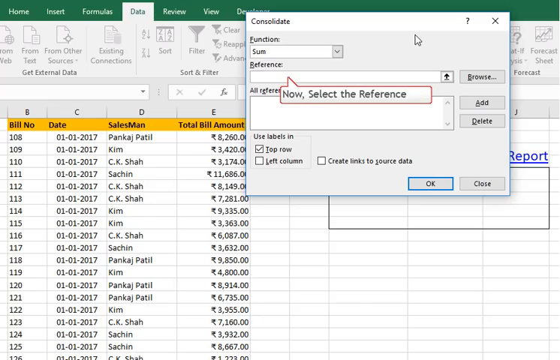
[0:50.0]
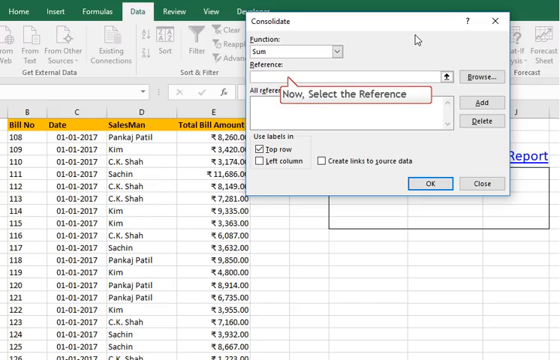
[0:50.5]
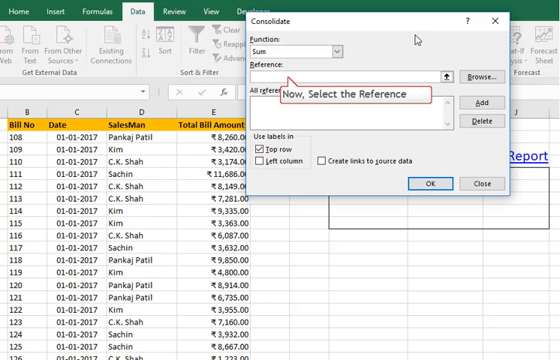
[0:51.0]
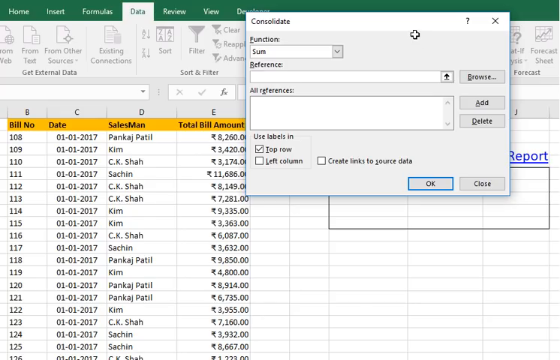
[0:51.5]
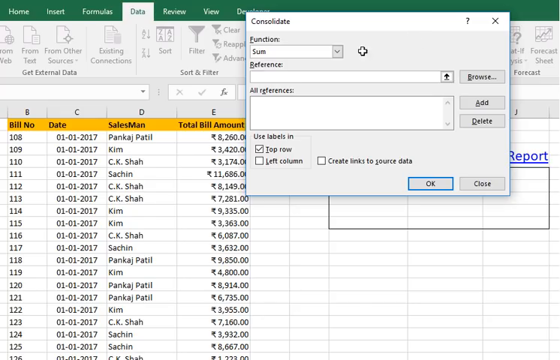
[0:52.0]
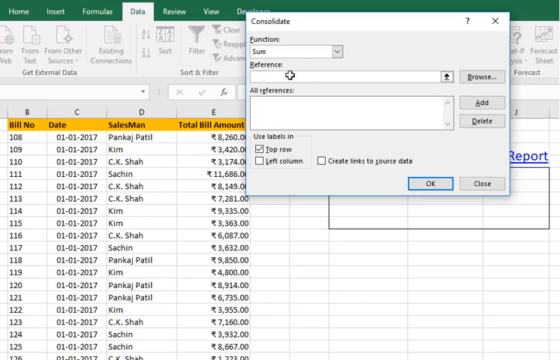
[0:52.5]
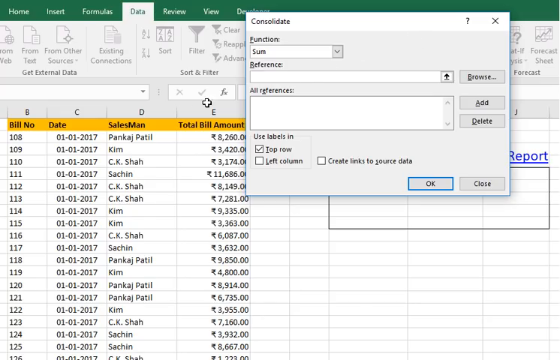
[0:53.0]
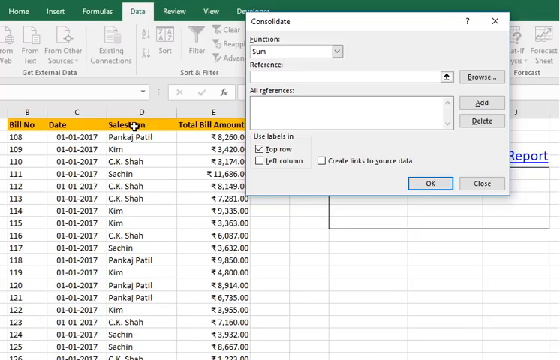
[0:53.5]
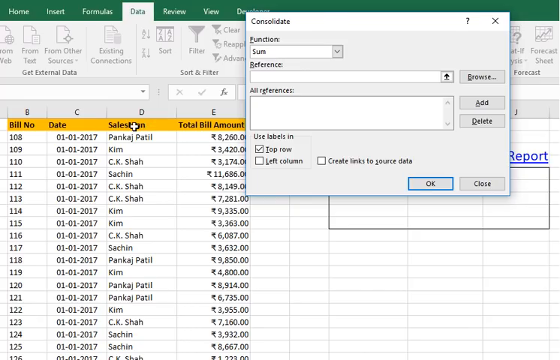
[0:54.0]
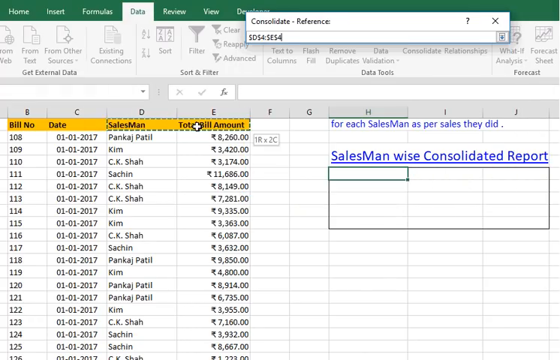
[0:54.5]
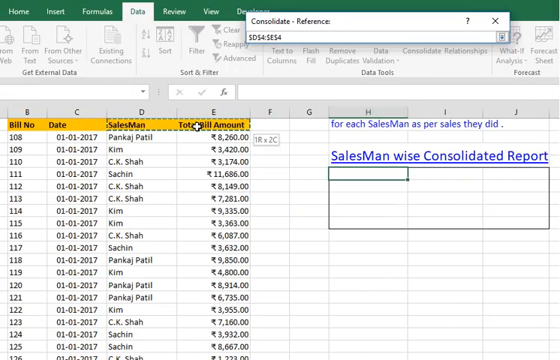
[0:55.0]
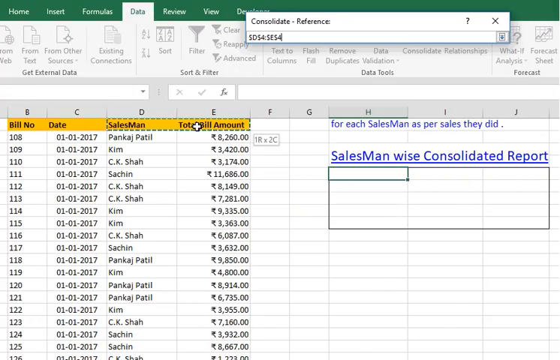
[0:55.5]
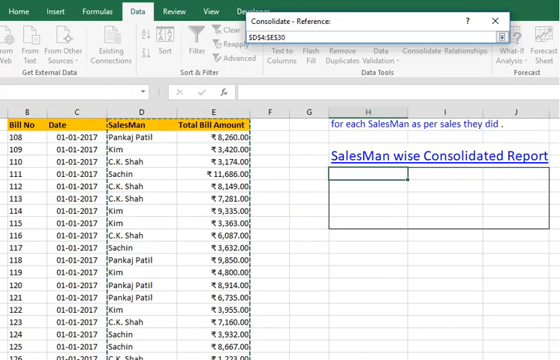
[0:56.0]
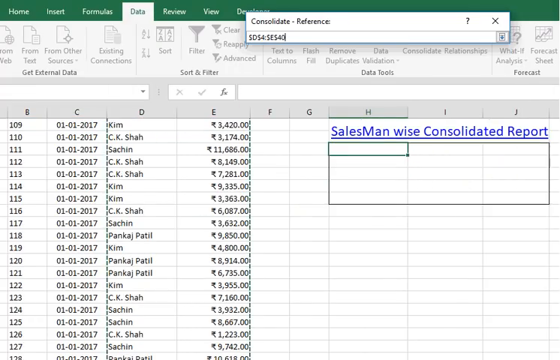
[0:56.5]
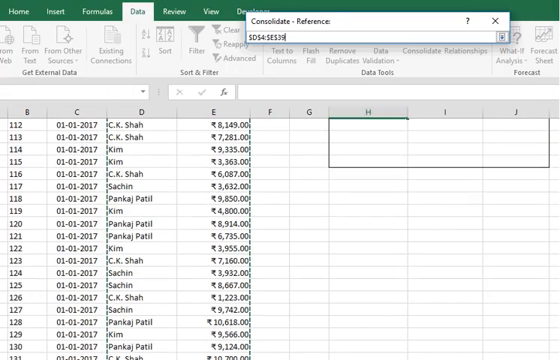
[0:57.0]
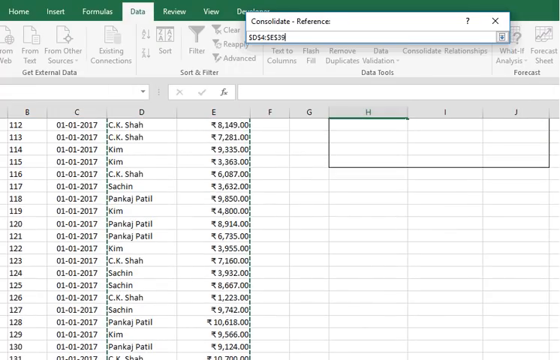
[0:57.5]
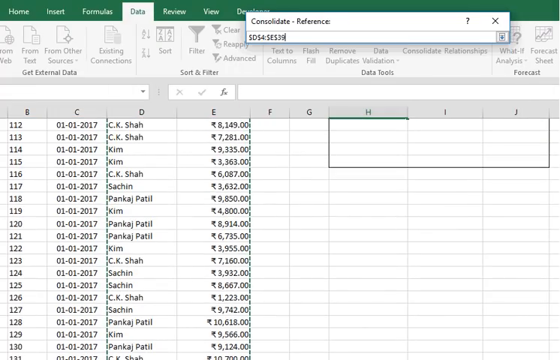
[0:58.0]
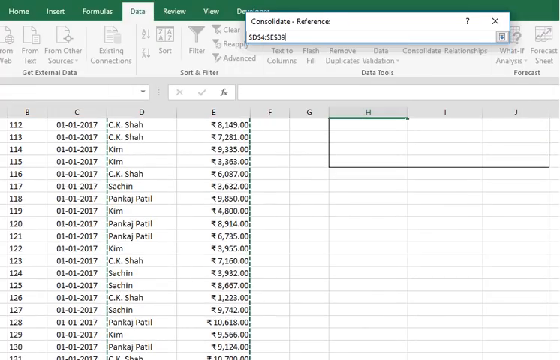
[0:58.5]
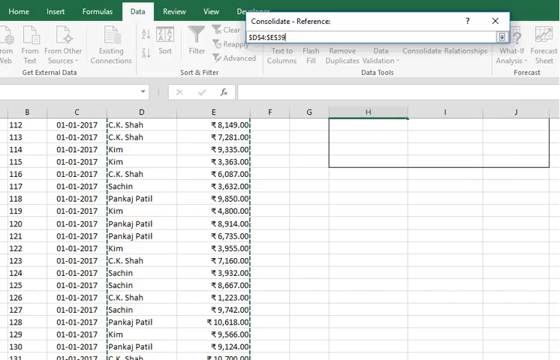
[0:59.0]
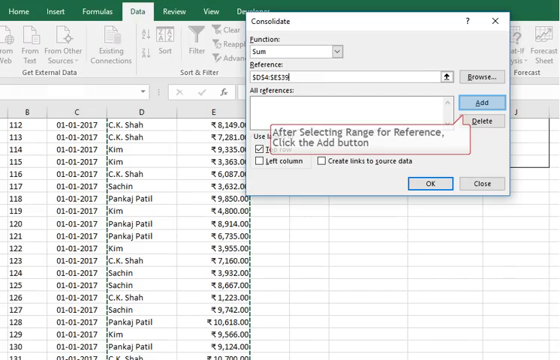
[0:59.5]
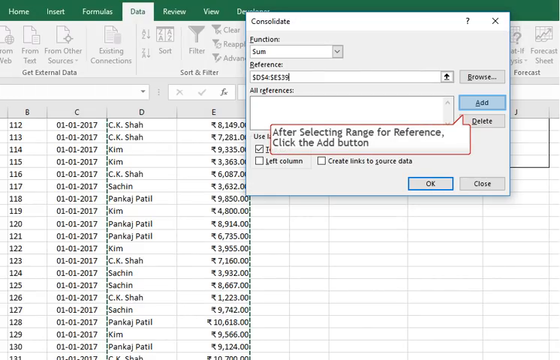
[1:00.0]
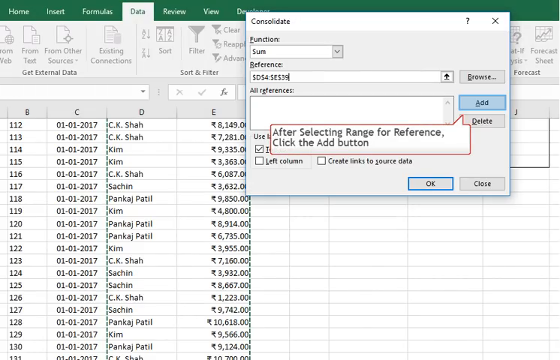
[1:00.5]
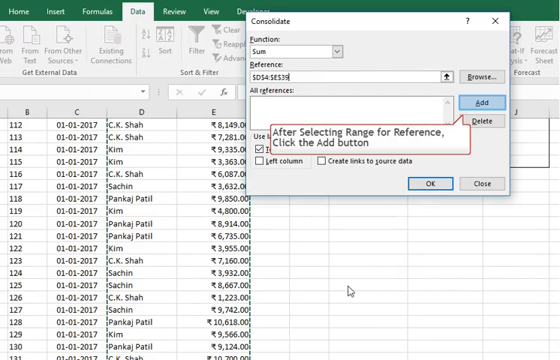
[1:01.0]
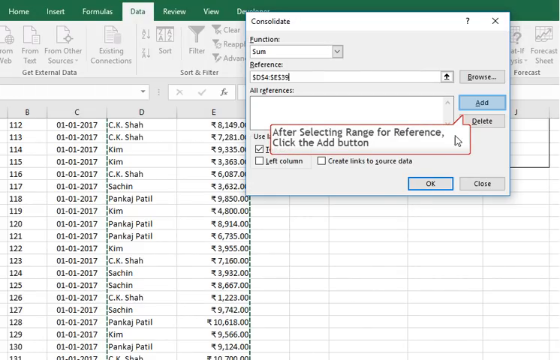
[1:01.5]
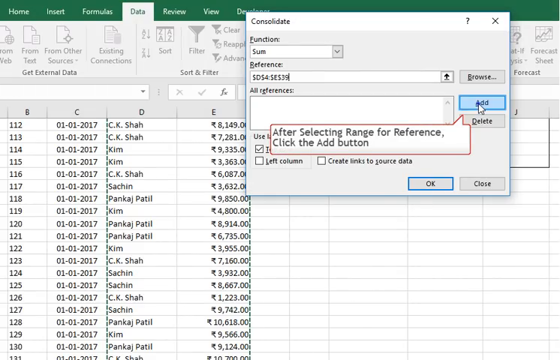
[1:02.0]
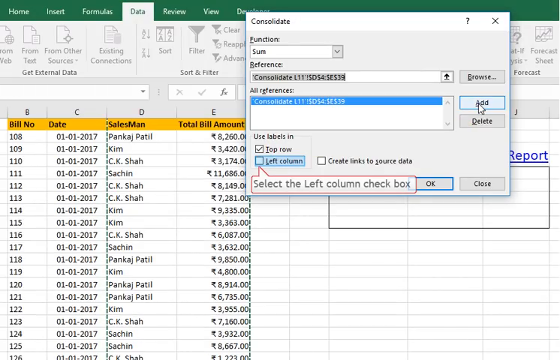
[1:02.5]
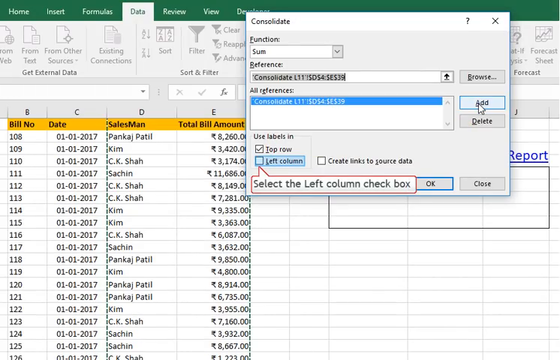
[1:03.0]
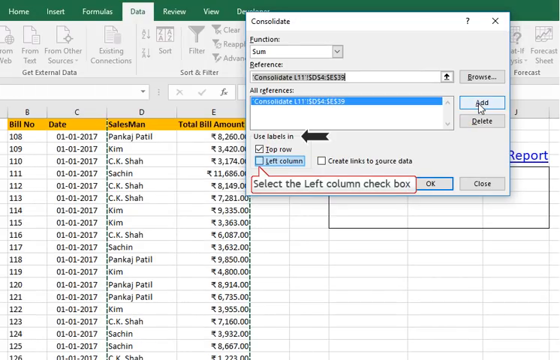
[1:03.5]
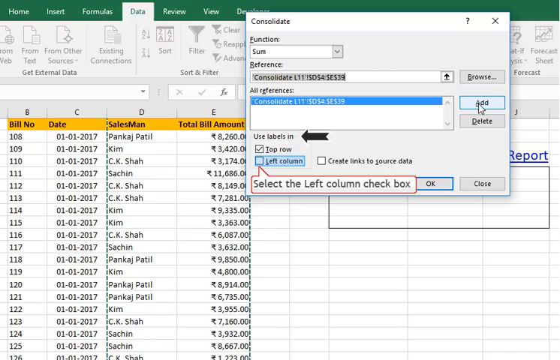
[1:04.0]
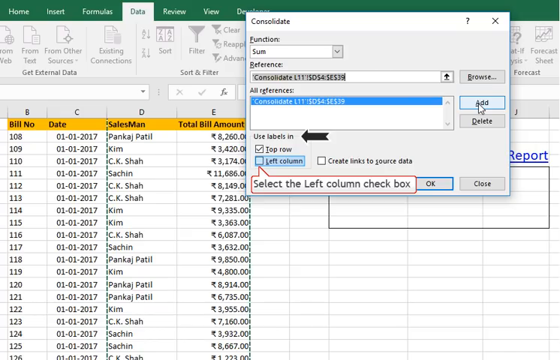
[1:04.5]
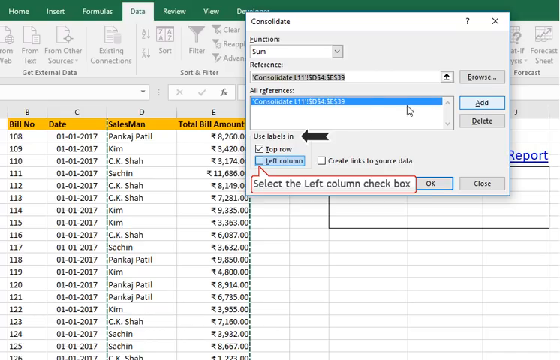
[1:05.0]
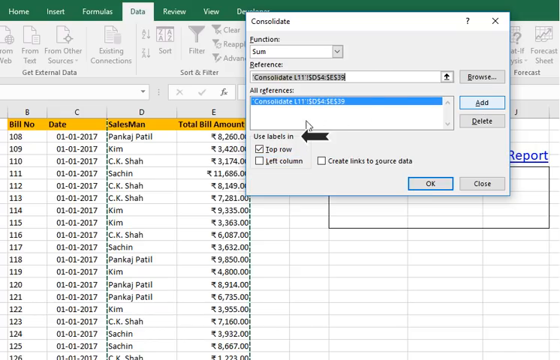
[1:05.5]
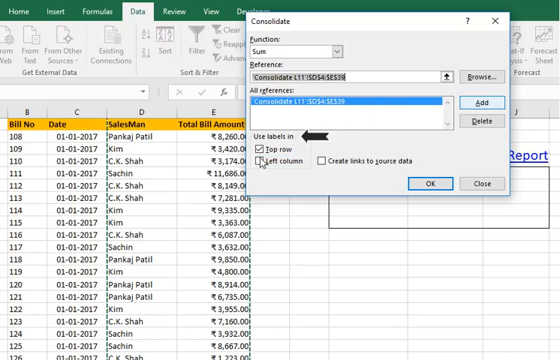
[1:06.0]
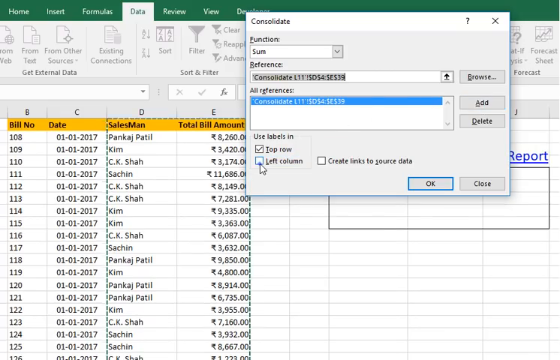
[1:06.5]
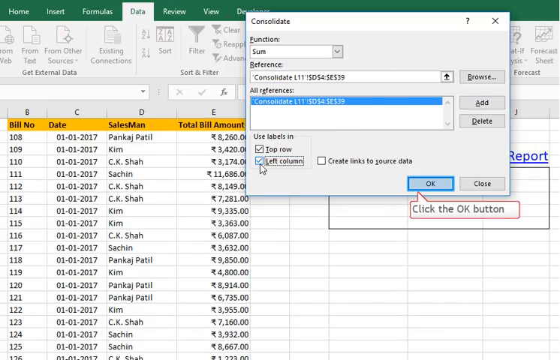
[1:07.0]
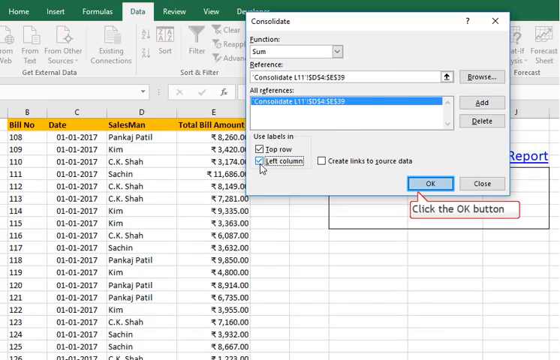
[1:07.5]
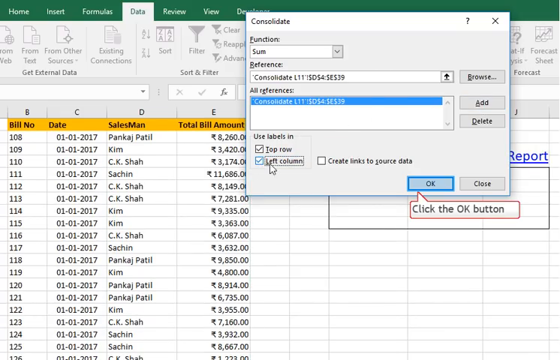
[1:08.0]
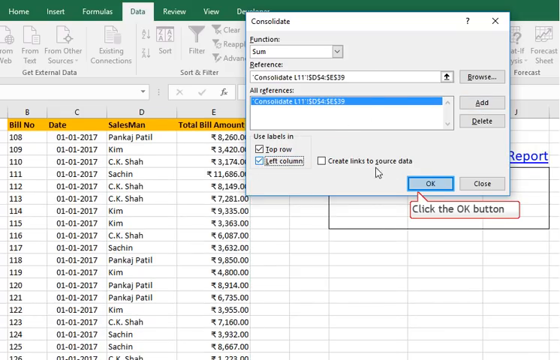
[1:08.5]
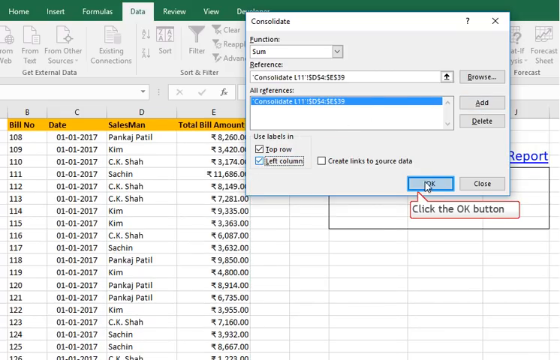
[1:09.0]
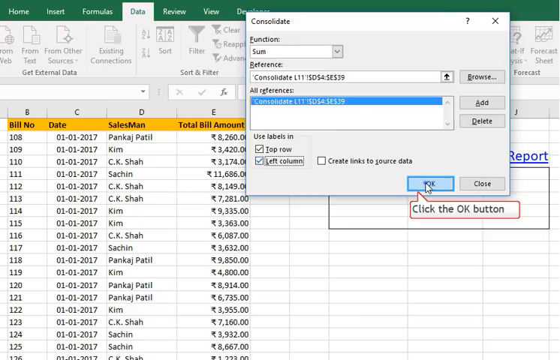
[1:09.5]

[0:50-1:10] A laptop screen shows an Excel page with data to be used to fill the salesman-wise consolidated report. The page shows the steps to take to calculate and fill in the form. Nothing changes; the setting stays the same, and the text on the screen is readable.